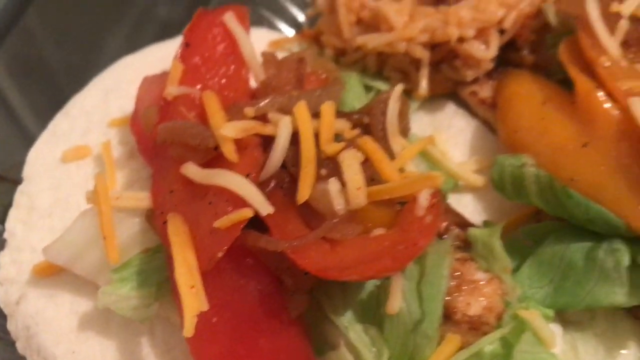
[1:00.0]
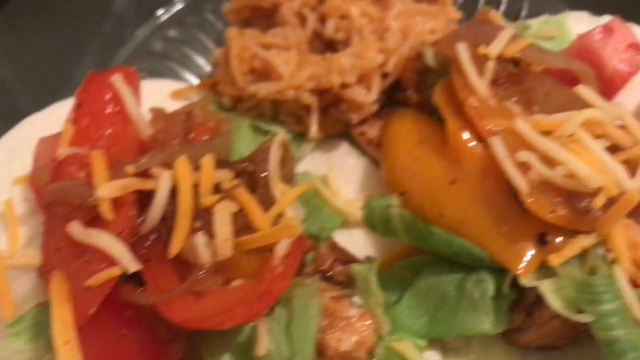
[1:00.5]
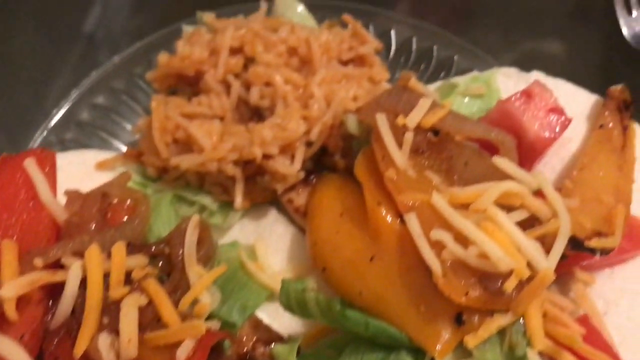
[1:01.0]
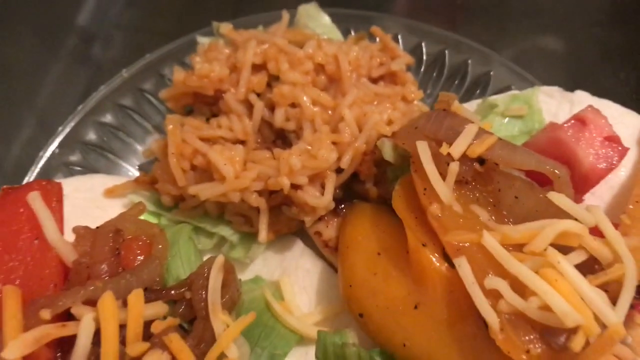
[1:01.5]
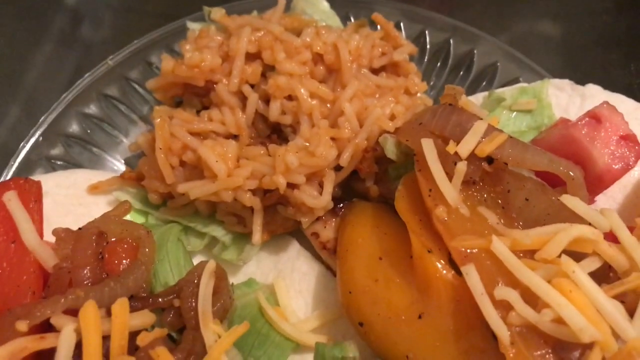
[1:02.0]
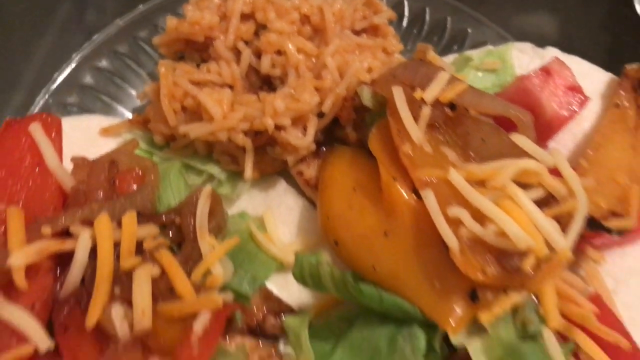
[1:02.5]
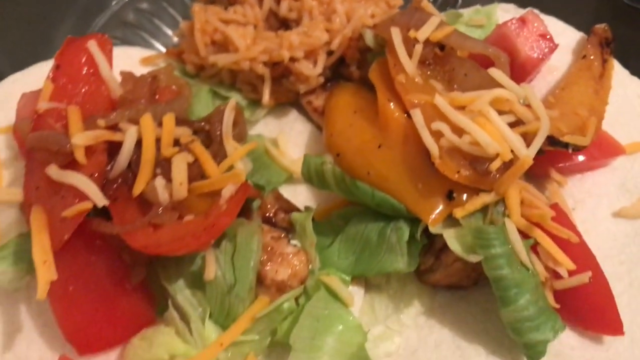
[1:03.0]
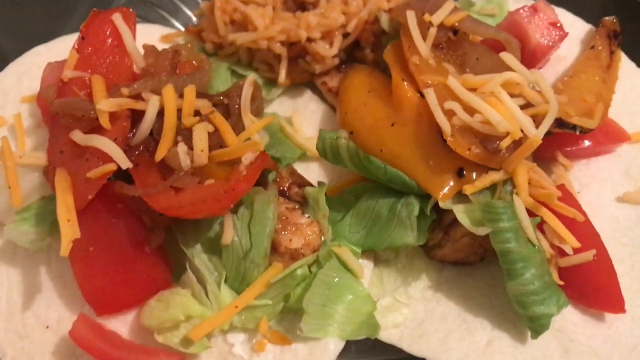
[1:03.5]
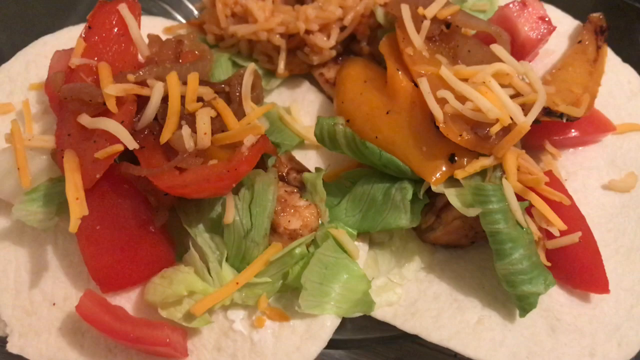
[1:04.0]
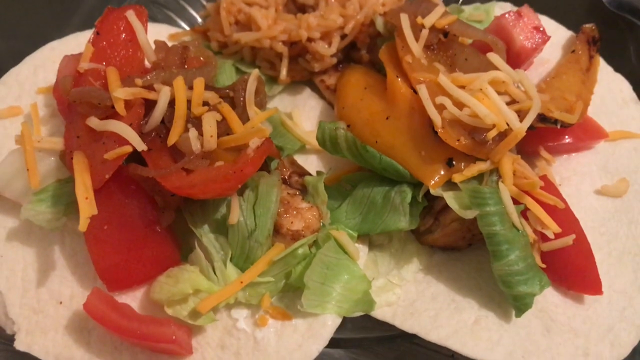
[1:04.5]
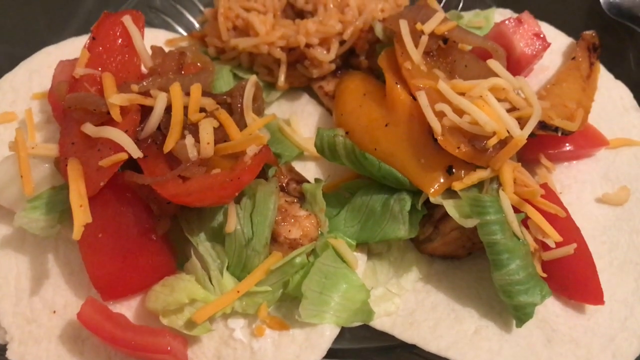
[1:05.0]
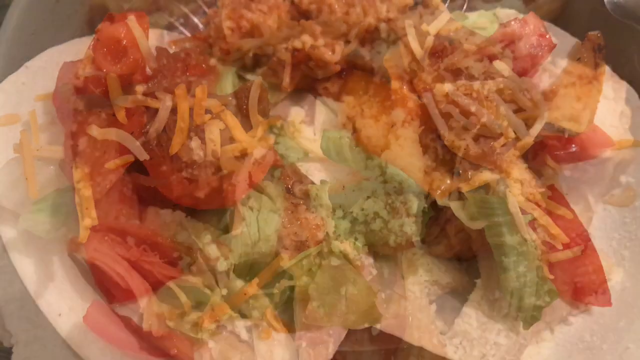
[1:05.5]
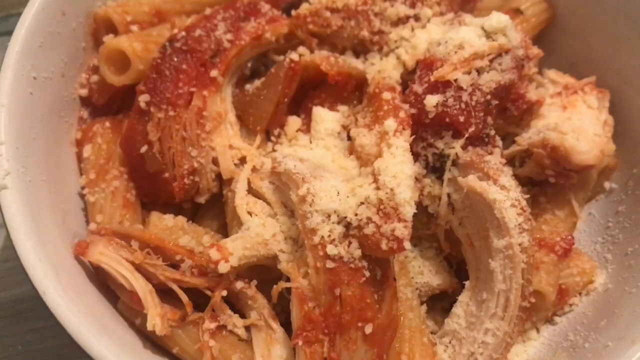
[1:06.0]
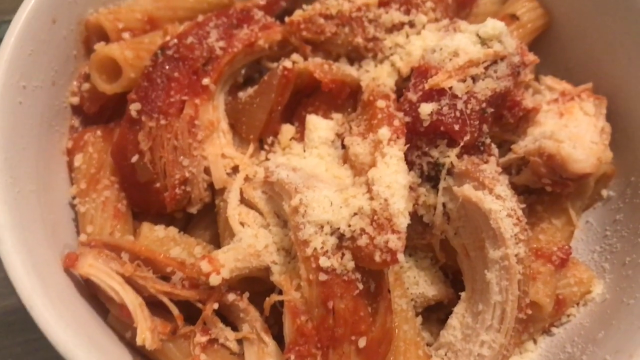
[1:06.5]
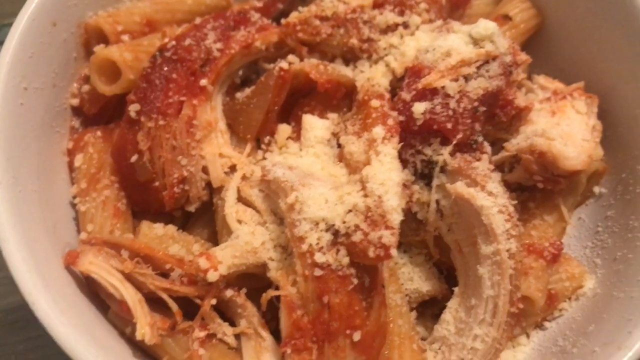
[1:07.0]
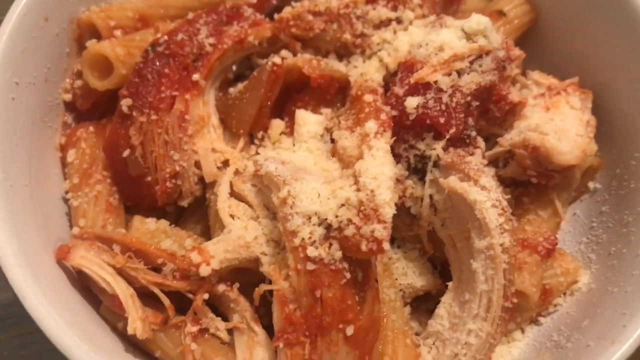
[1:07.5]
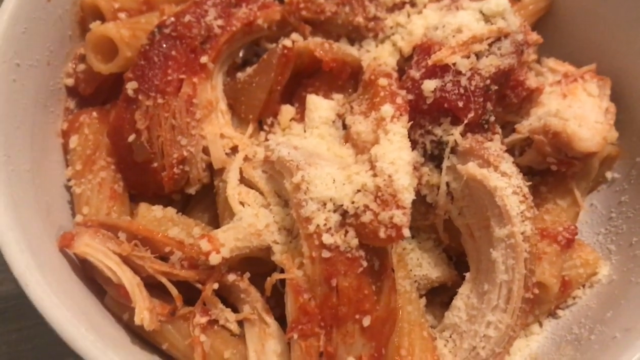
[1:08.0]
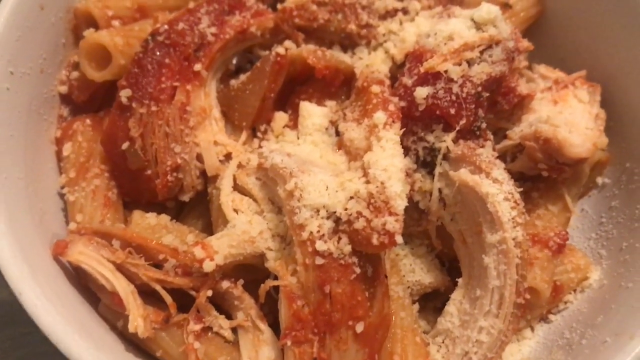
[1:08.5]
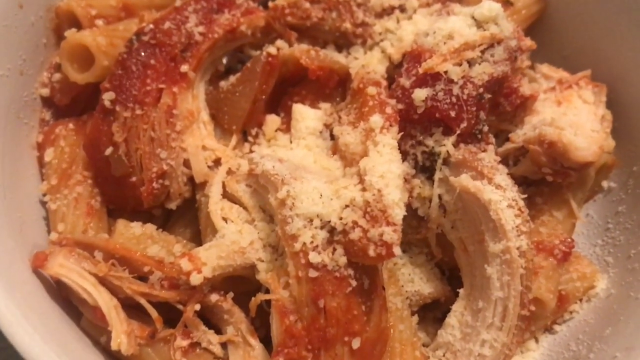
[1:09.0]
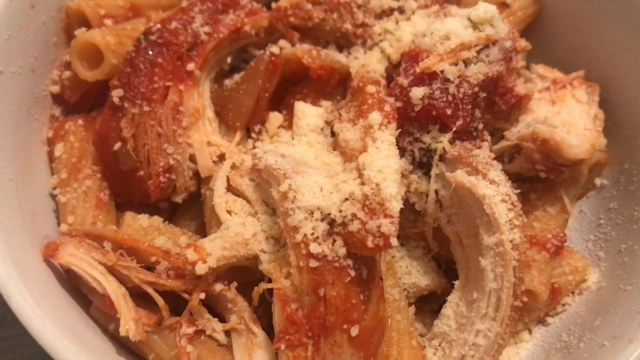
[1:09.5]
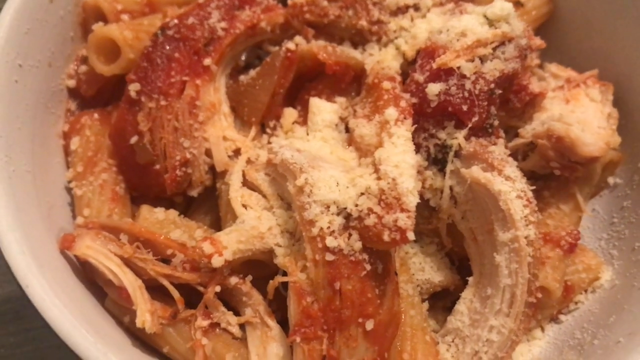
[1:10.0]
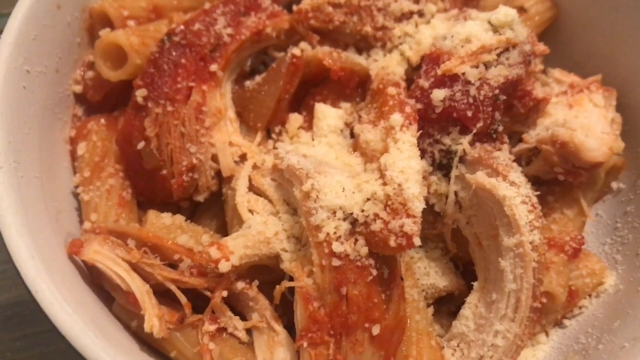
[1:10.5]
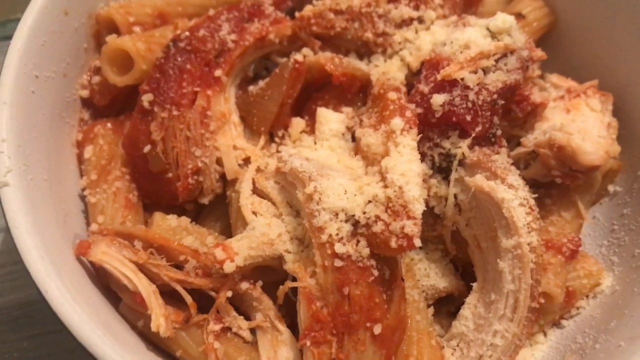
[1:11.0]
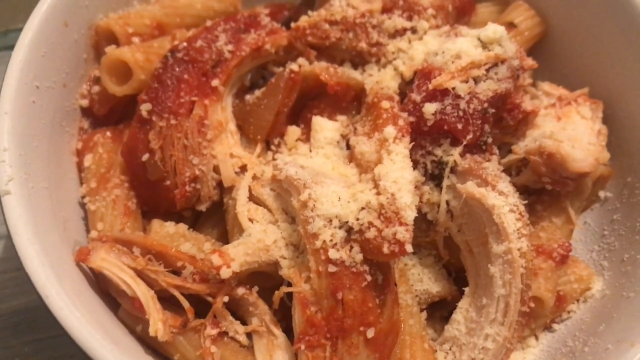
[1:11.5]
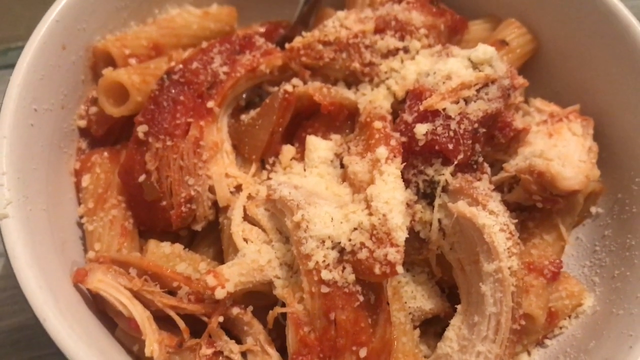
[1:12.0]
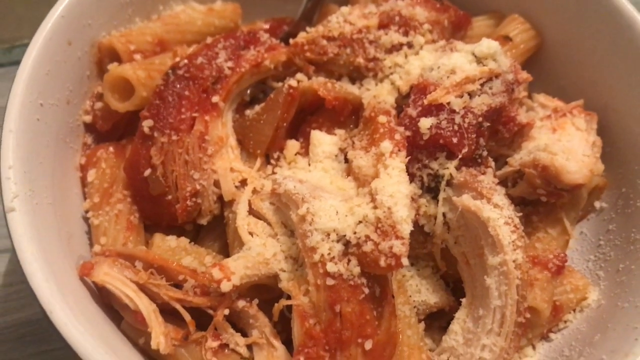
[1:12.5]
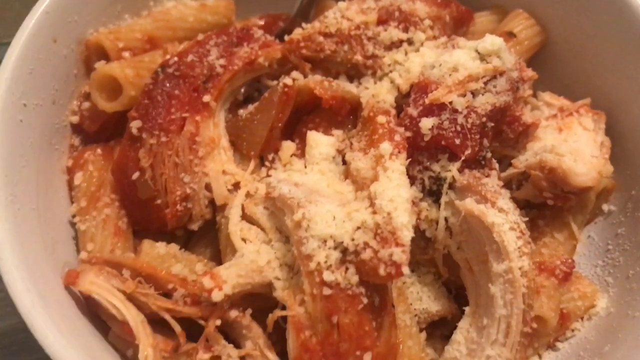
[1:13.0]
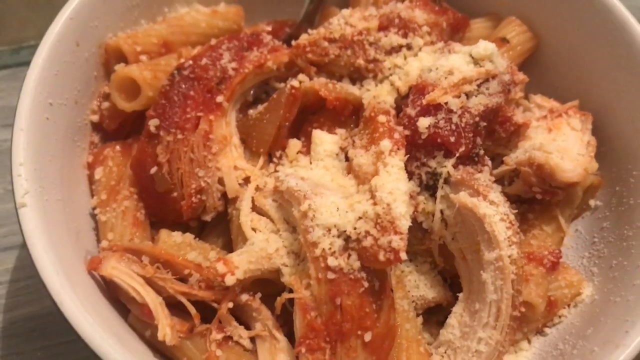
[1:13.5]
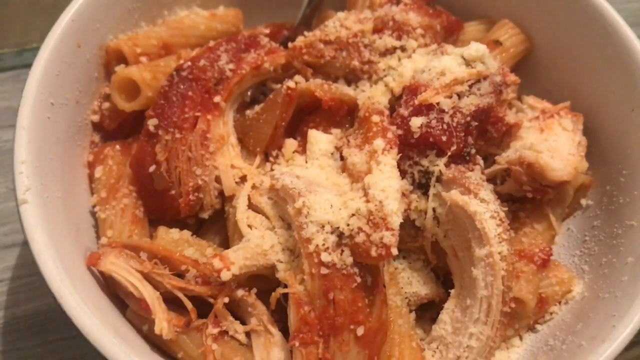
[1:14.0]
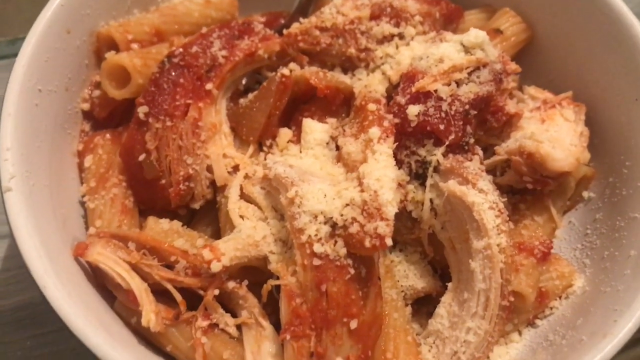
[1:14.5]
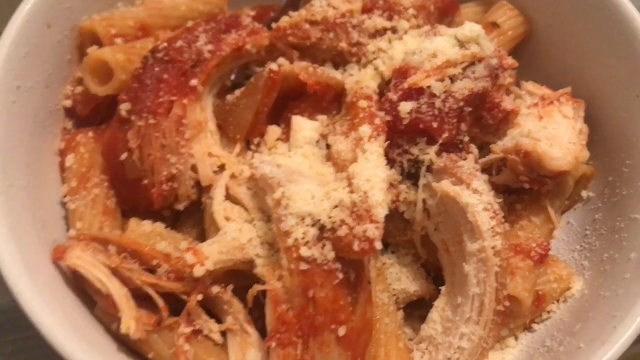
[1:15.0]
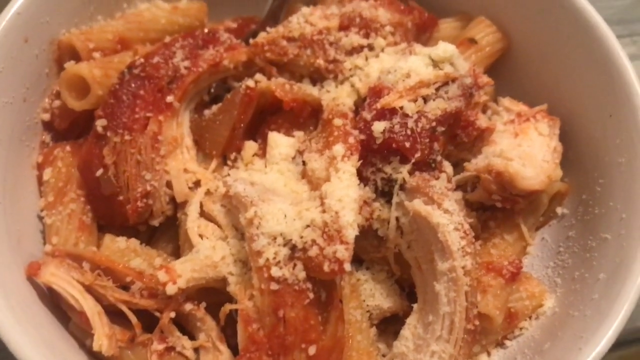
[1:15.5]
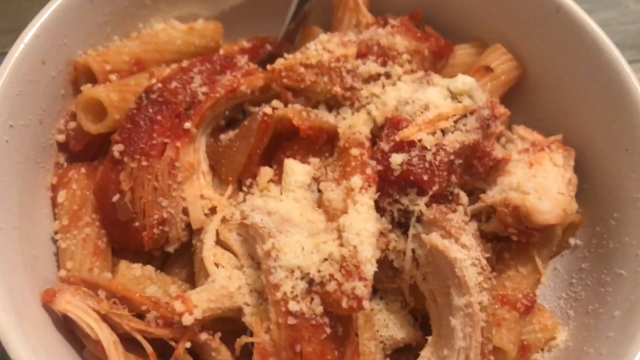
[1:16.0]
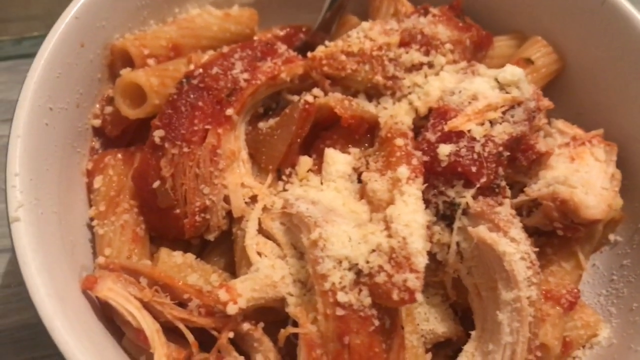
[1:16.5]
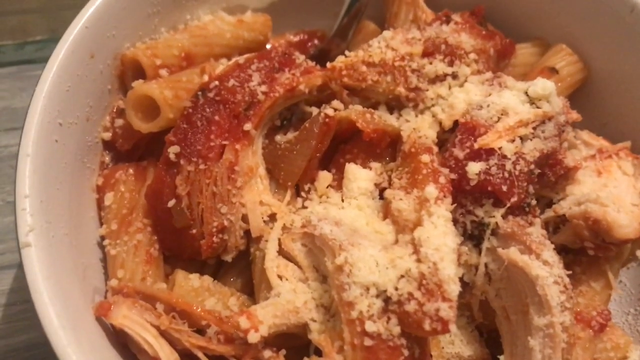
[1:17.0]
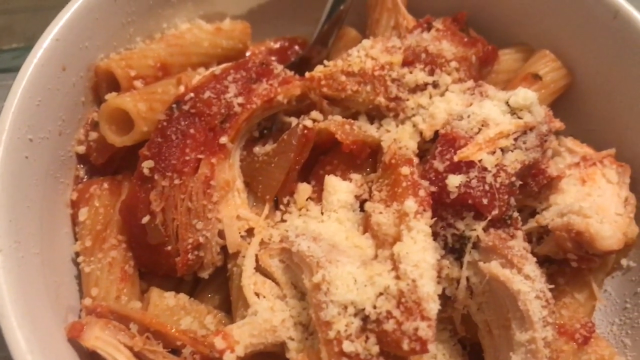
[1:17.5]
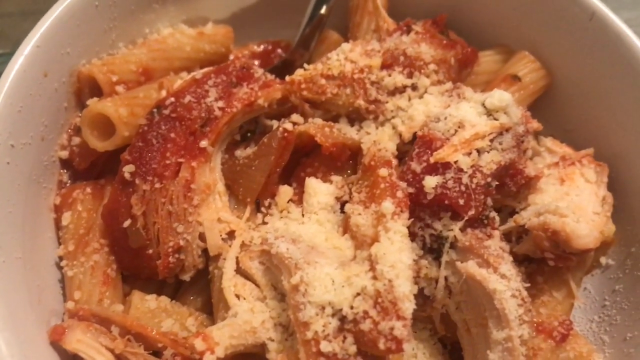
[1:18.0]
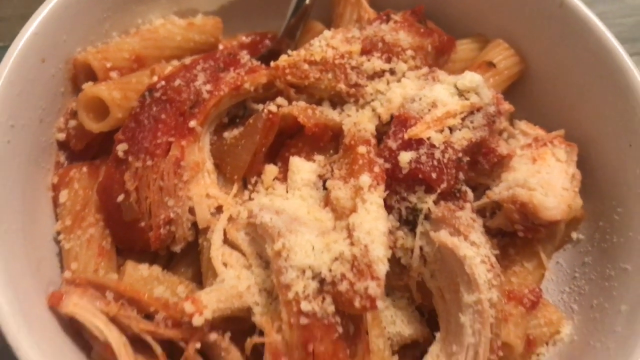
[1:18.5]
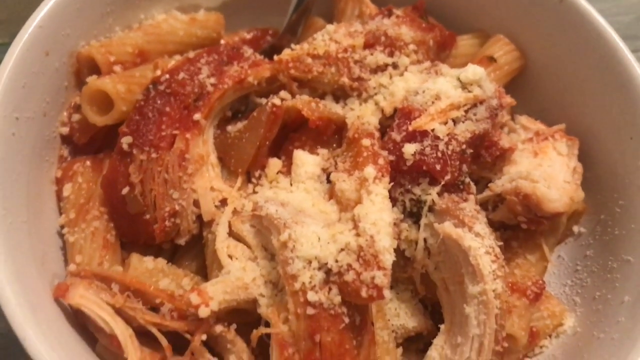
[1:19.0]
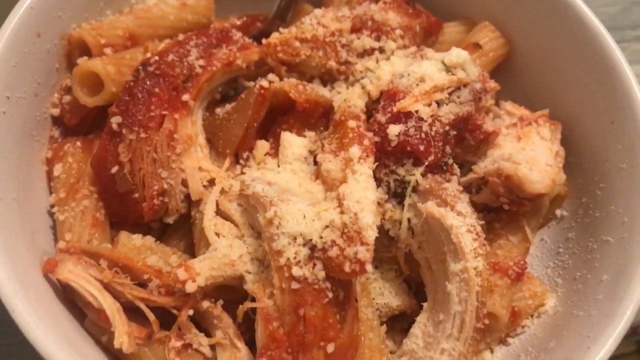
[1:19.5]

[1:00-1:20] The plate is showcased, starting with the rice at the top of the plate. Pieces of chopped-up orange or yellow pepper are on the right side of the plate. There is also what looks to be two tortillas, lettuce, cheese, tomato, rice, and the chicken that was seasoned or marinated at the beginning. Then there is a white bowl with pasta, tomato and tuna, with what seems to be some sort of cheese, most likely parmesan, sprinkled on top, and a silver fork in the bowl. The camera zooms in and out and moves around, apparently as the person talks about the food they have cooked. It is unclear whether the chicken in the pasta shot is the chicken used for the fajita dinner.